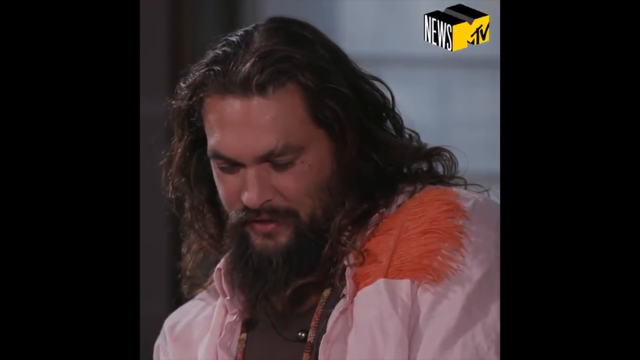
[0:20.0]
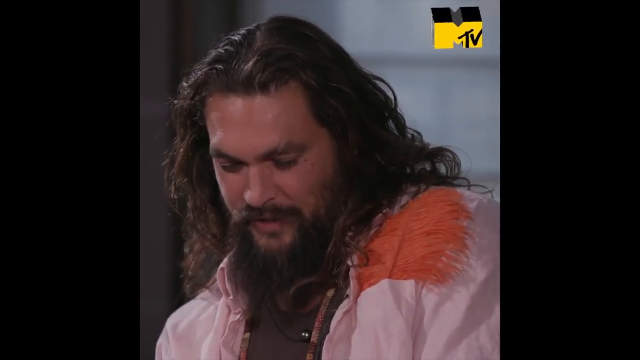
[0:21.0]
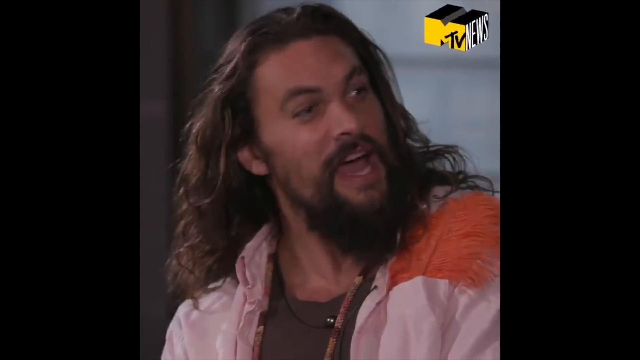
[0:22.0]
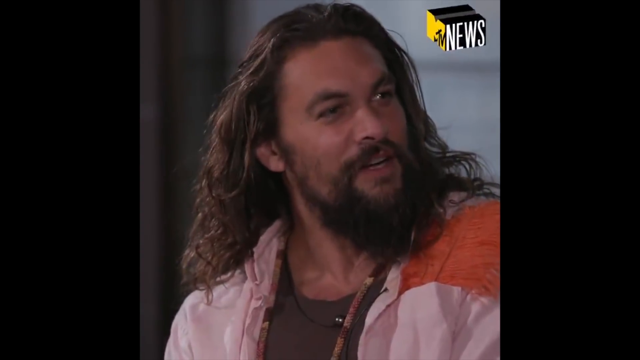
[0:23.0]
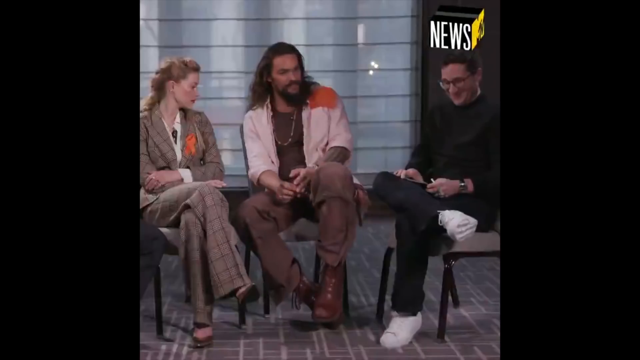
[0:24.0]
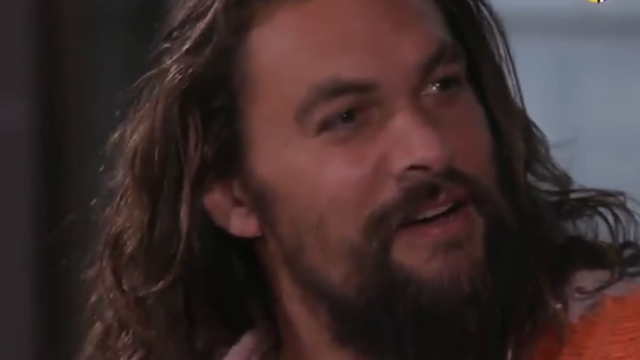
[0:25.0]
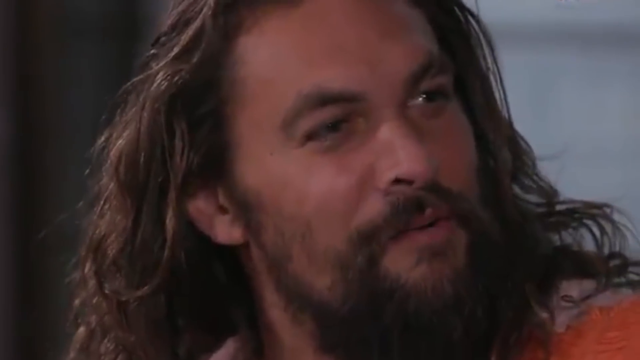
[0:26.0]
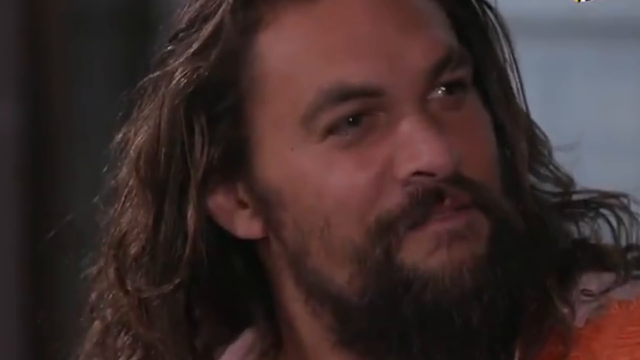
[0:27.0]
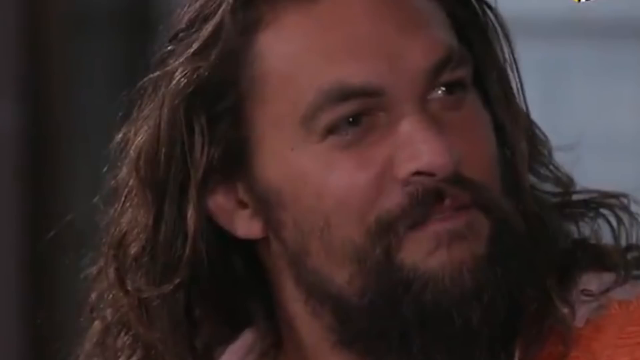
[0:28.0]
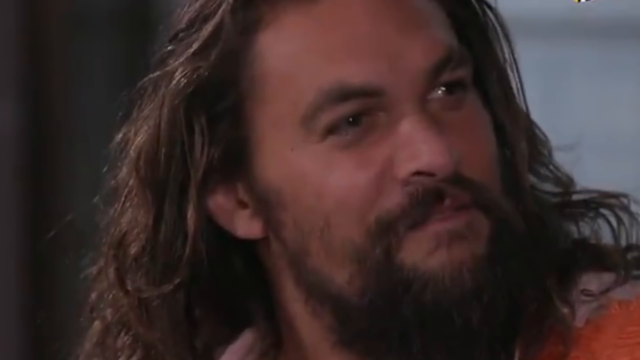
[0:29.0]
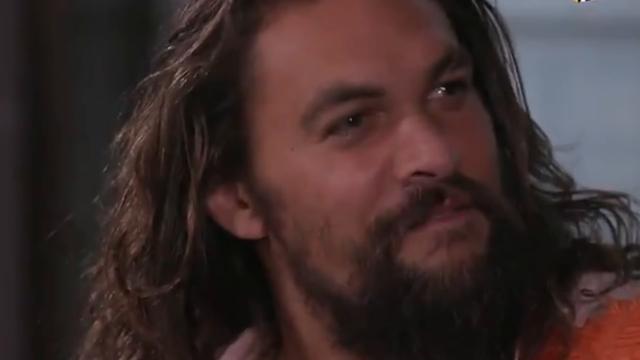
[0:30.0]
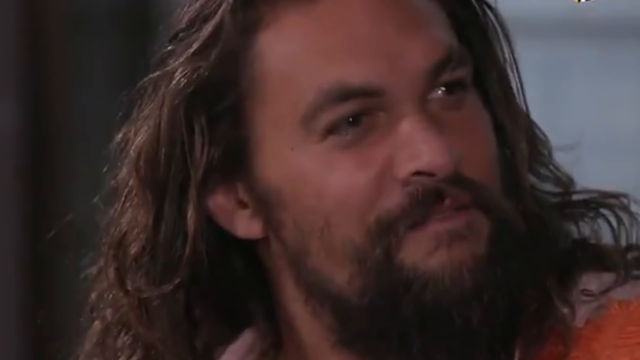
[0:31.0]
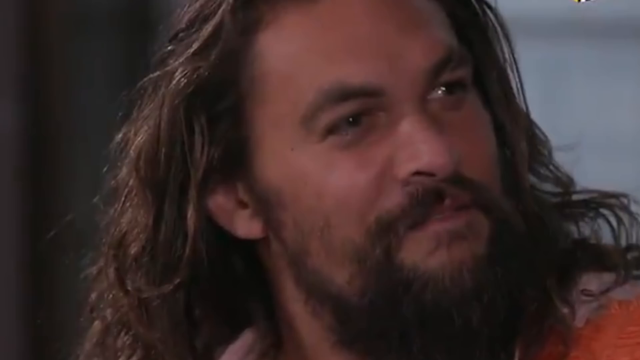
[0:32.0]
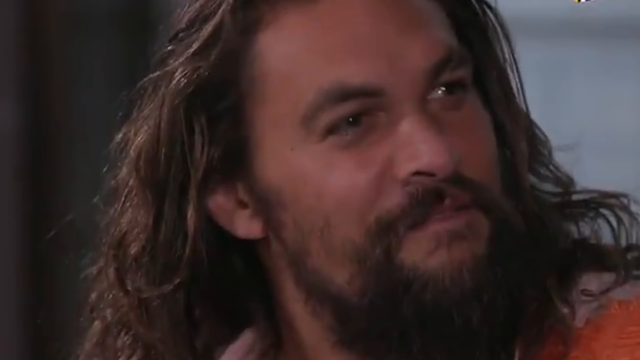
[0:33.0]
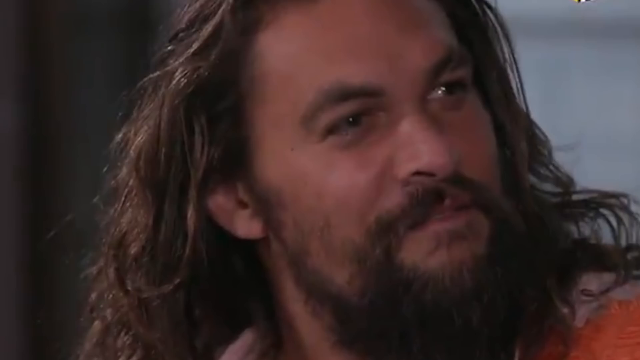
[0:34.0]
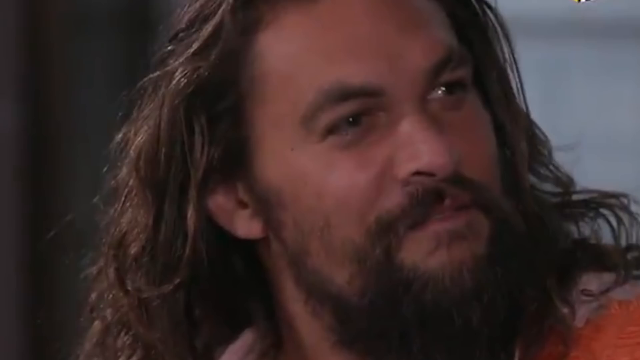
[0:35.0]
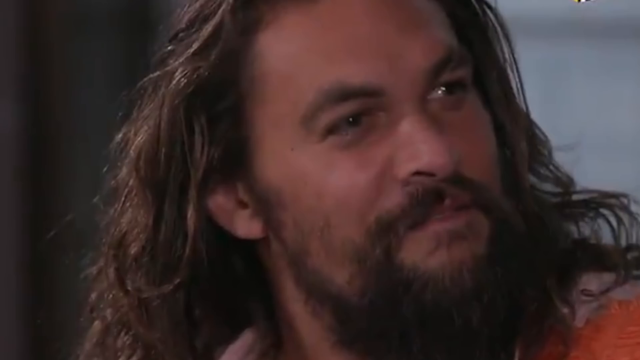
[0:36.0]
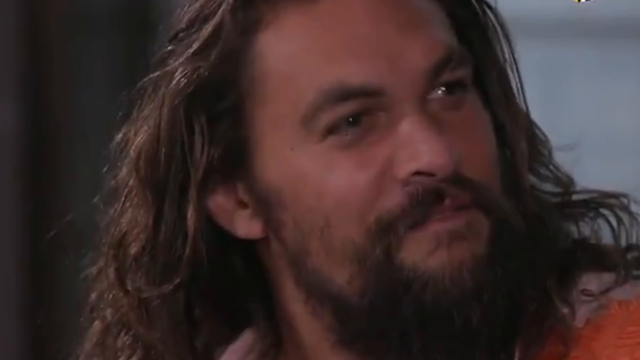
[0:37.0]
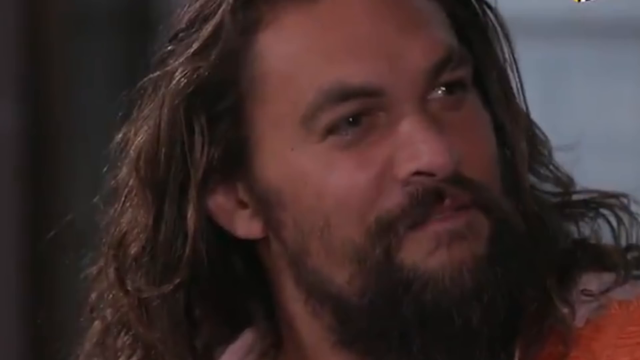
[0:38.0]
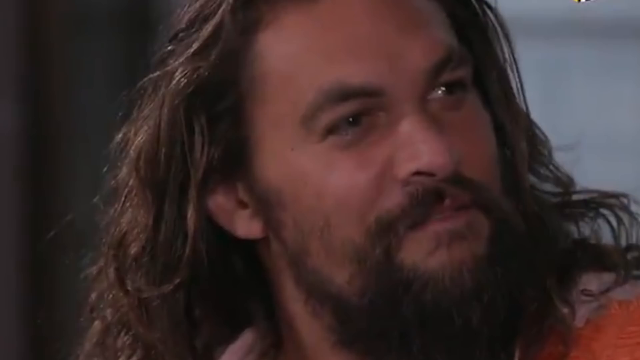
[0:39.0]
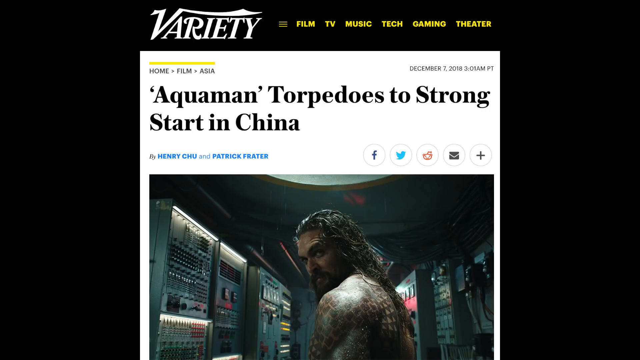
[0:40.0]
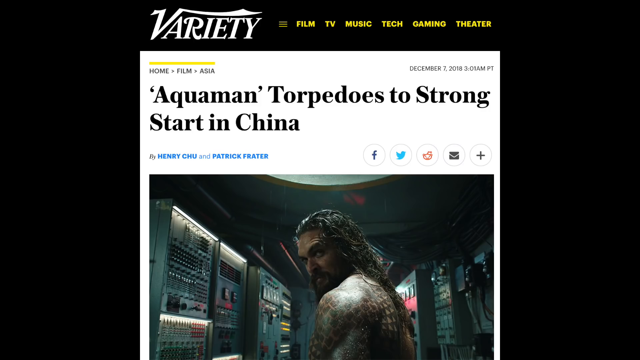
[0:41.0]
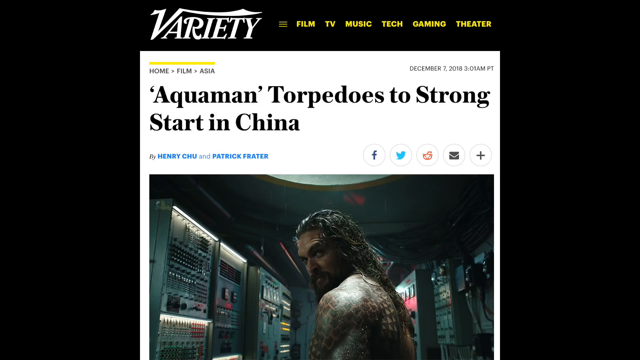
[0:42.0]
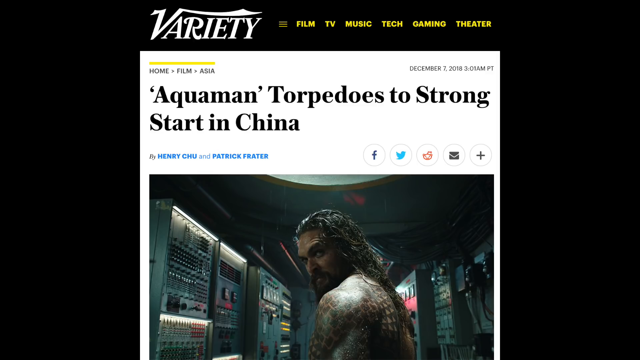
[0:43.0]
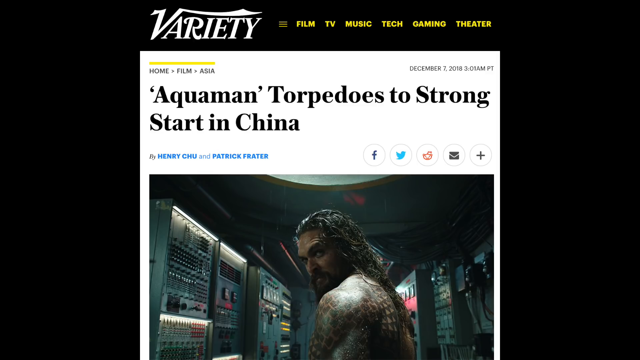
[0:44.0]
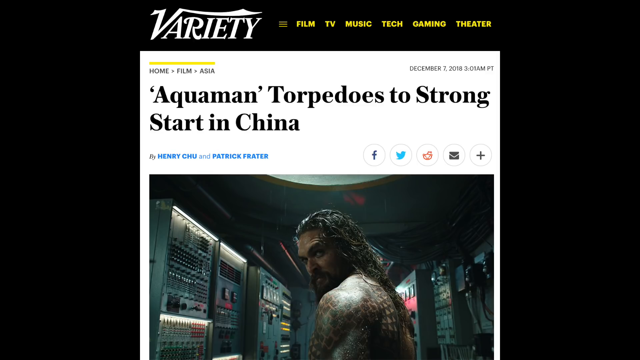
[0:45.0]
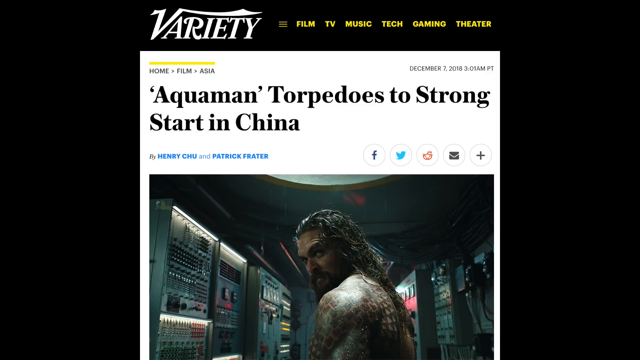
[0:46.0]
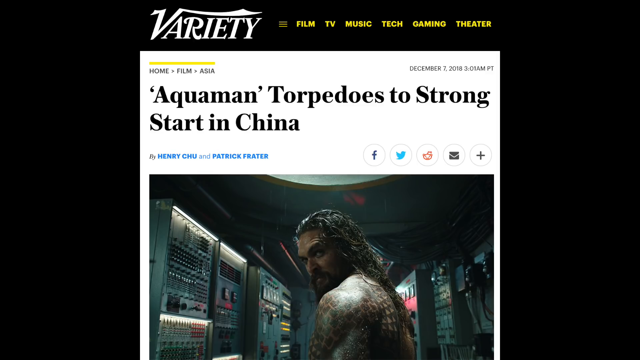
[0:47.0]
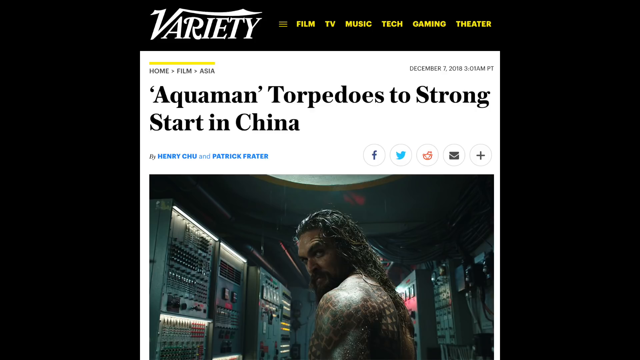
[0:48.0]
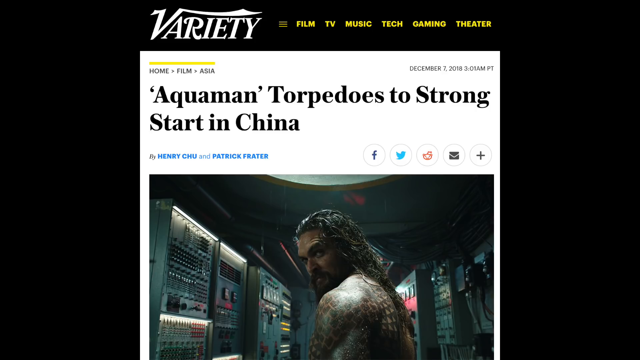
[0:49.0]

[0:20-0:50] Jason Momoa speaks, looking excited. He wears a shirt with orange on it over a brown shirt, a necklace, brown pants, and brown boots, and has long hair and facial hair. Sitting beside him is Amber Heard in a woman's gray suit with a white shirt underneath. He has some sort of necklace on and long, braided hair. On the other side of Jason is Josh Horowitz in a black sweater, dark jeans, white shoes, and glasses. Jason looks over and almost stands up, then the video cuts to Jason looking directly, seemingly at Josh, and freezes the frame as he stares. It then changes to a news article that says "Aquaman torpedoes to strong start in China" with an image of Jason Momoa as Aquaman.